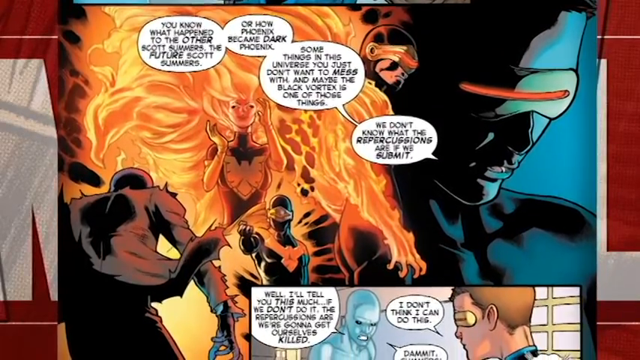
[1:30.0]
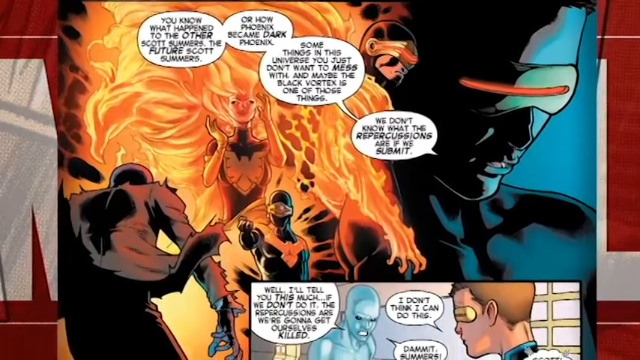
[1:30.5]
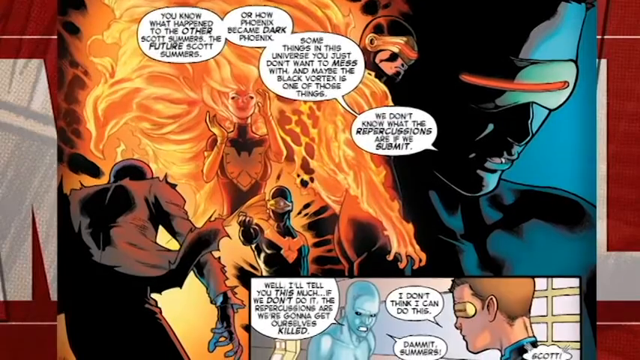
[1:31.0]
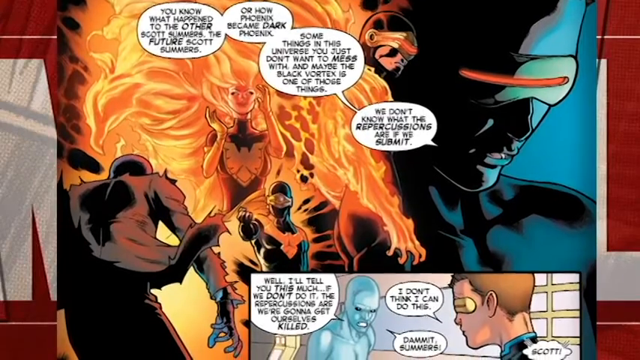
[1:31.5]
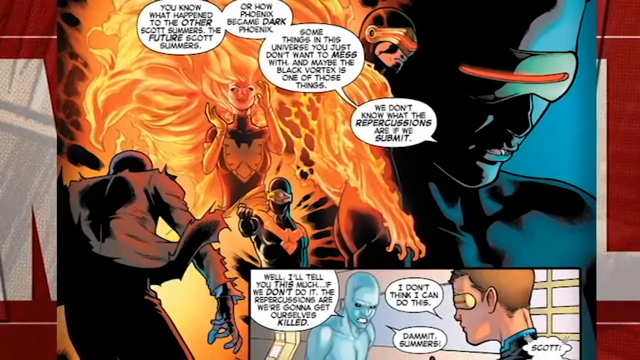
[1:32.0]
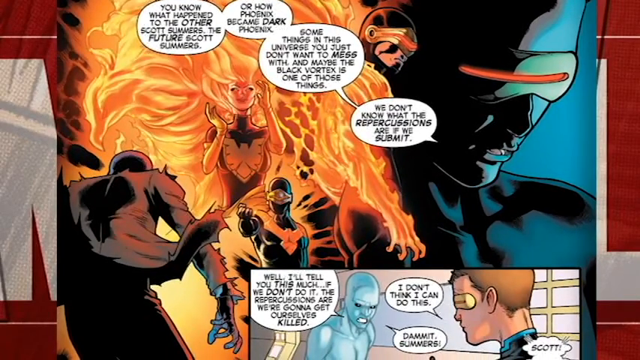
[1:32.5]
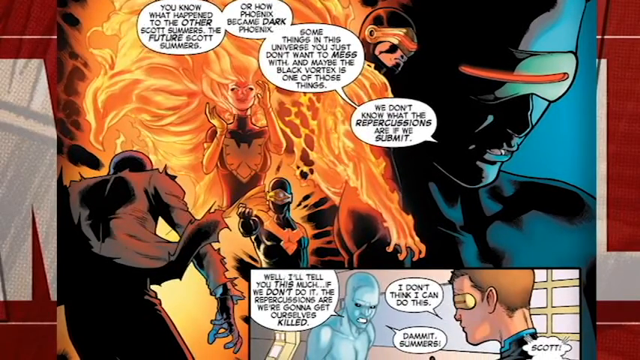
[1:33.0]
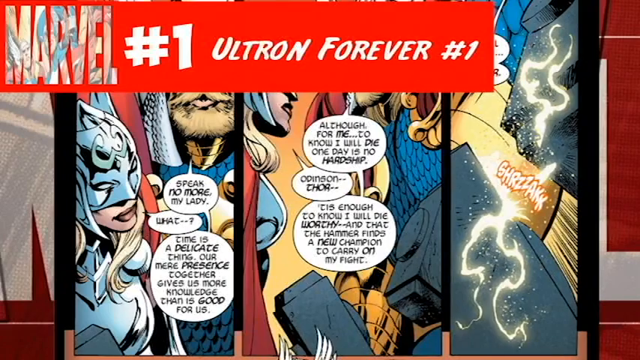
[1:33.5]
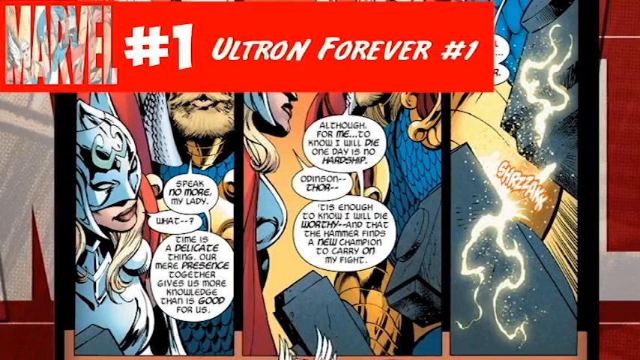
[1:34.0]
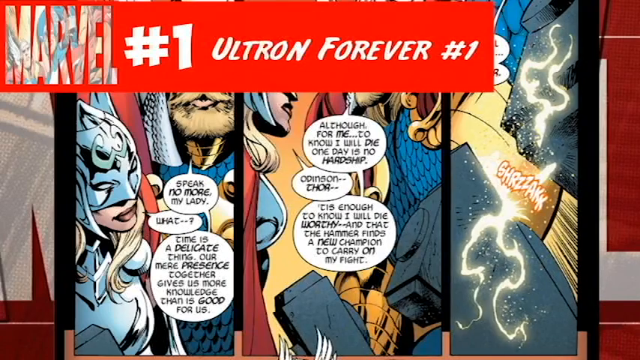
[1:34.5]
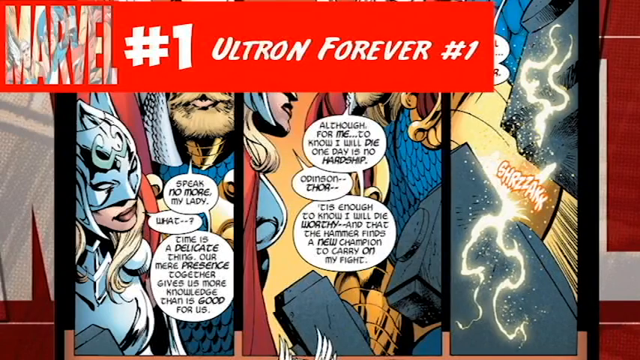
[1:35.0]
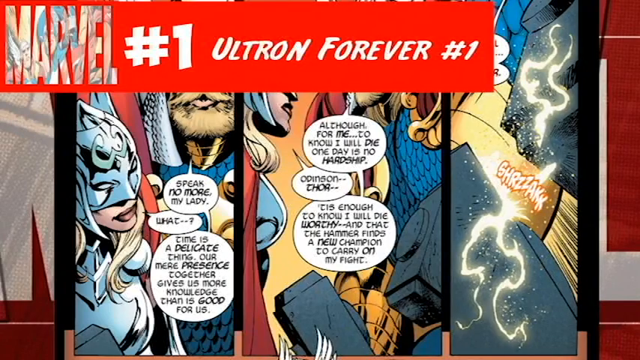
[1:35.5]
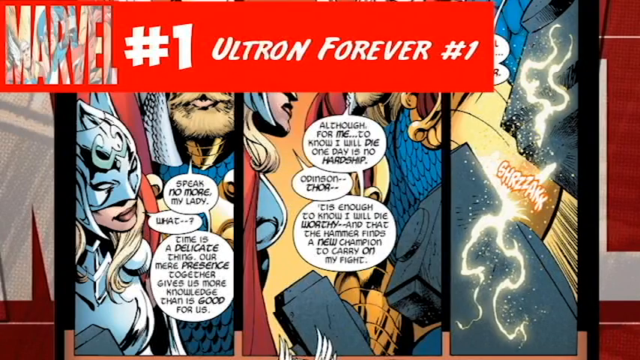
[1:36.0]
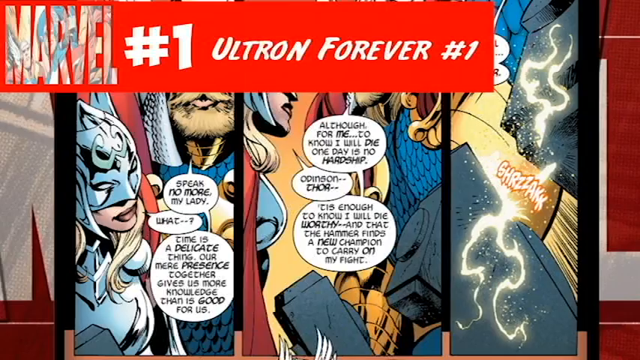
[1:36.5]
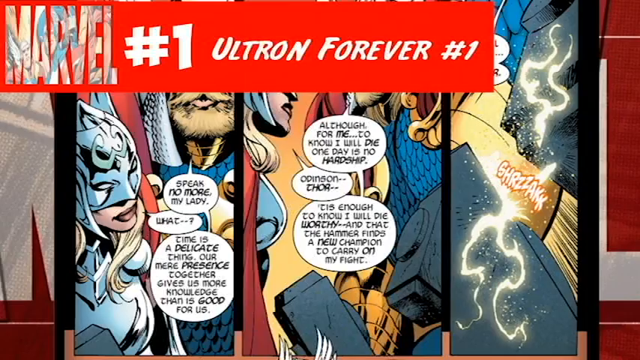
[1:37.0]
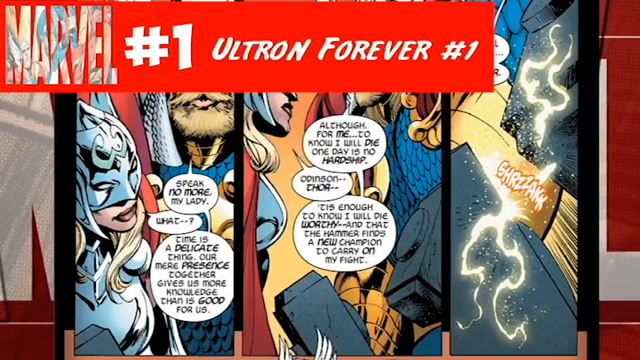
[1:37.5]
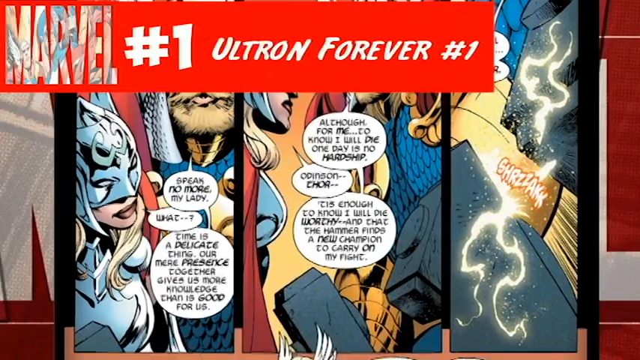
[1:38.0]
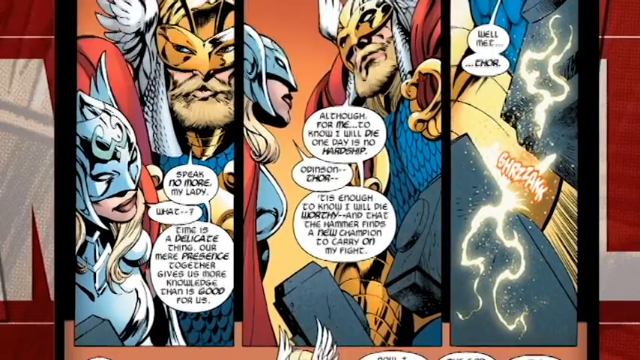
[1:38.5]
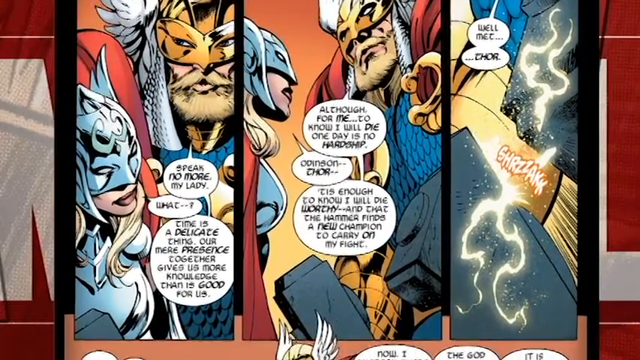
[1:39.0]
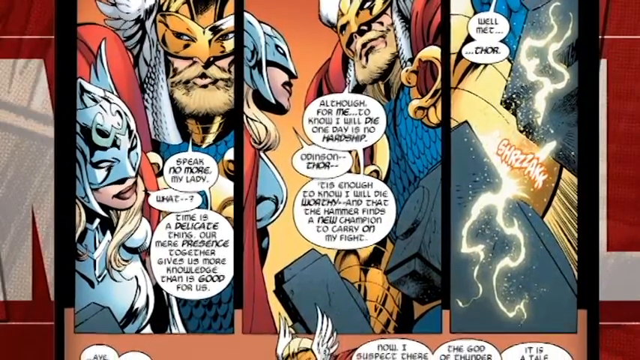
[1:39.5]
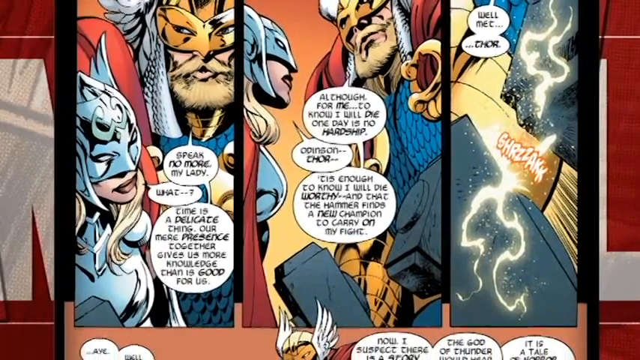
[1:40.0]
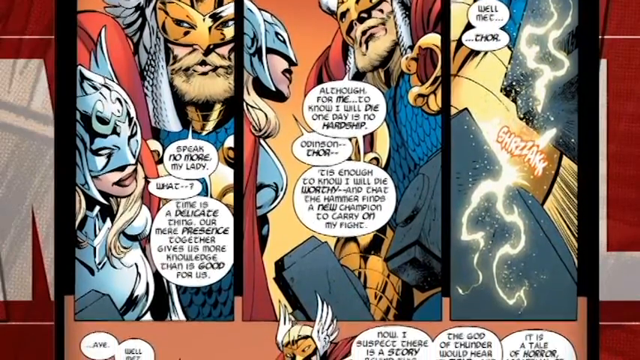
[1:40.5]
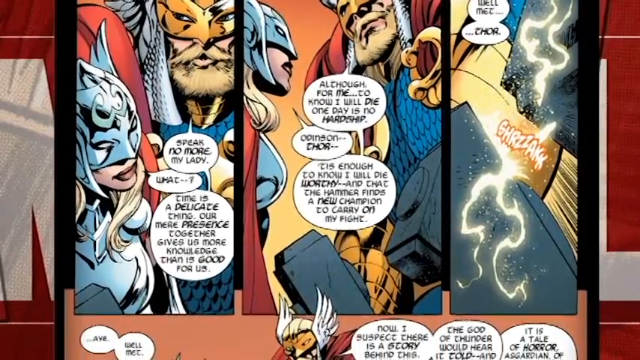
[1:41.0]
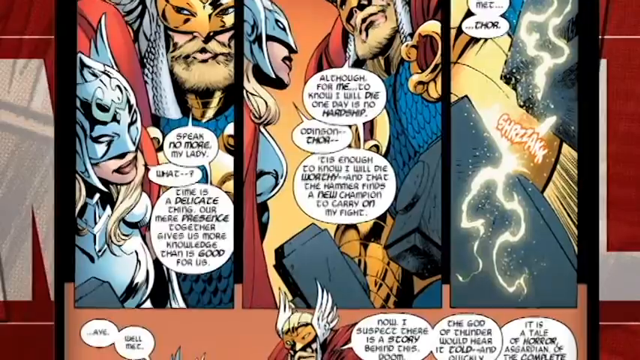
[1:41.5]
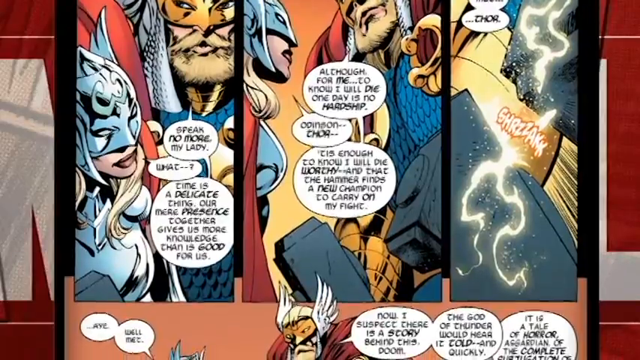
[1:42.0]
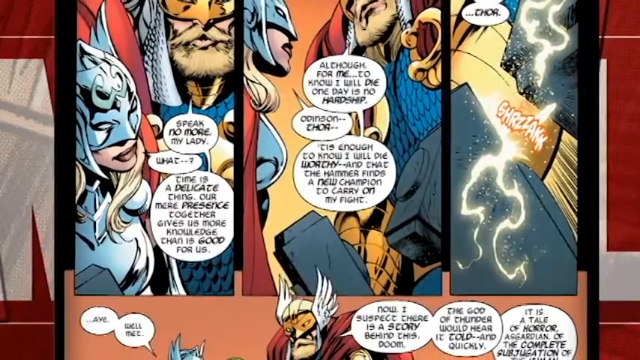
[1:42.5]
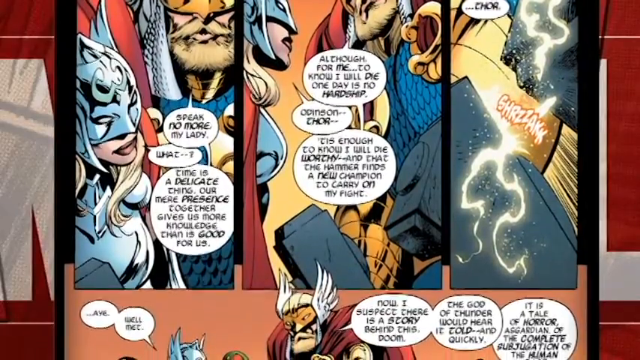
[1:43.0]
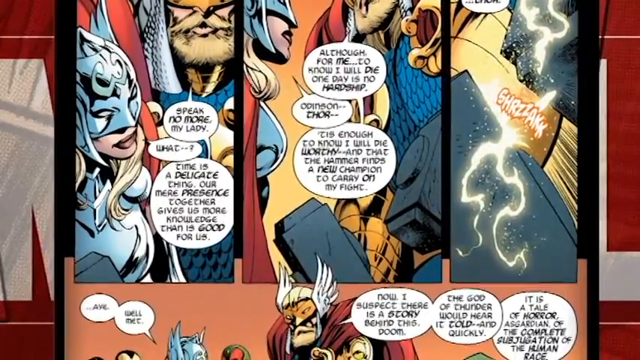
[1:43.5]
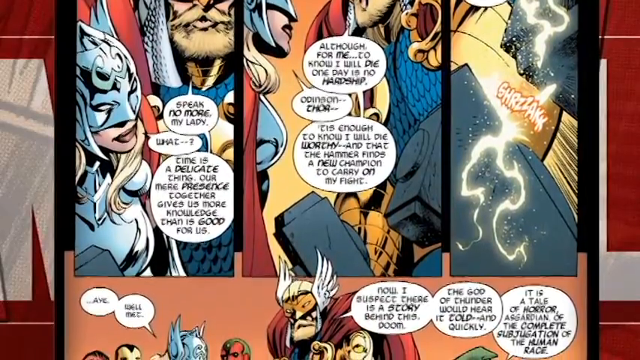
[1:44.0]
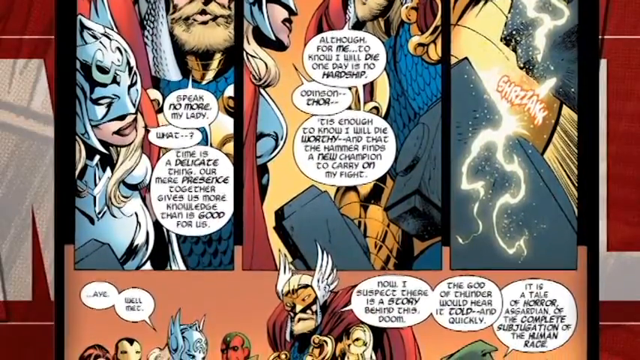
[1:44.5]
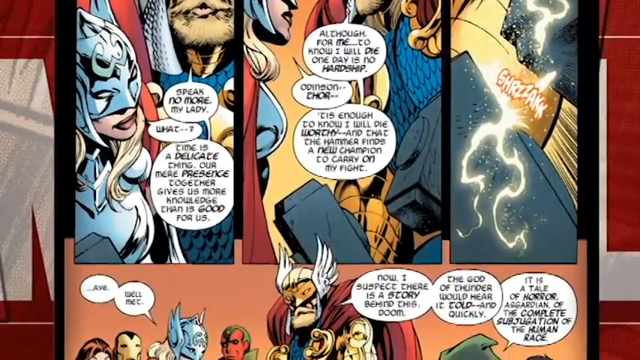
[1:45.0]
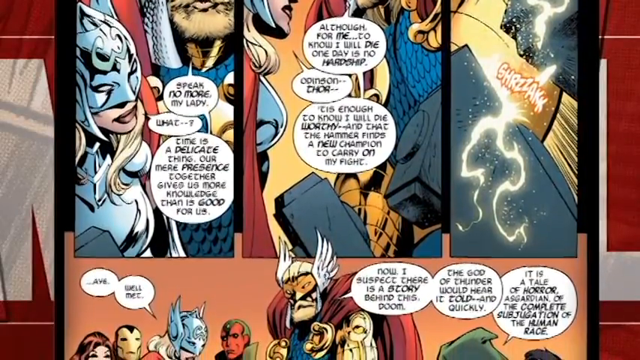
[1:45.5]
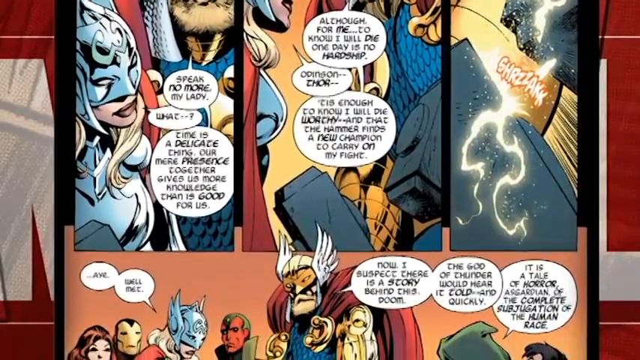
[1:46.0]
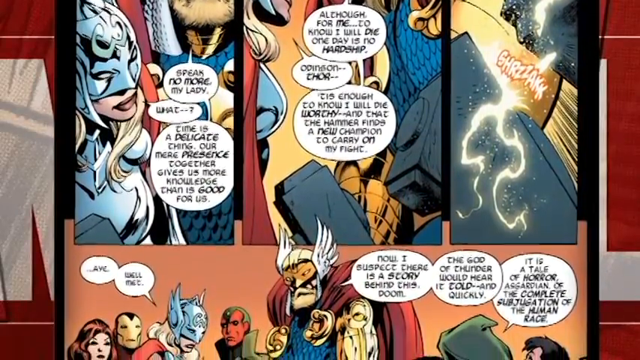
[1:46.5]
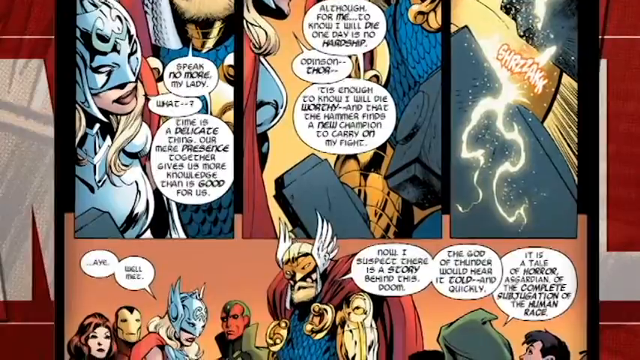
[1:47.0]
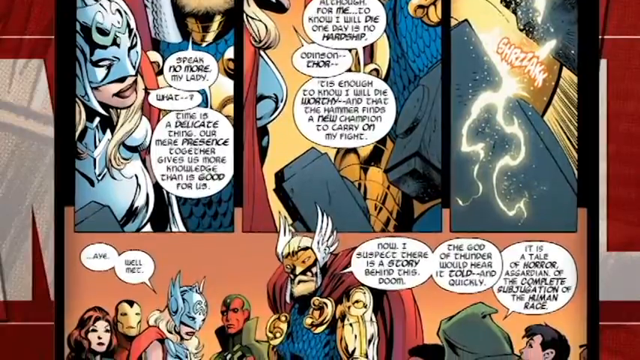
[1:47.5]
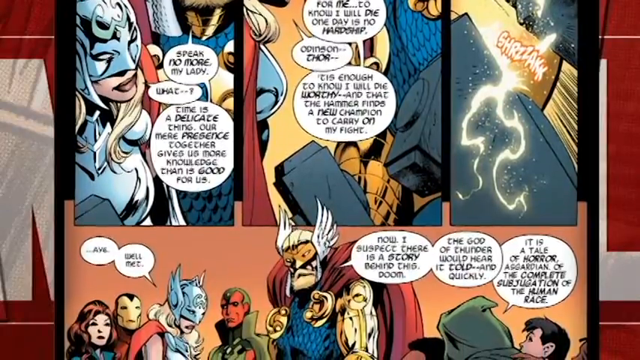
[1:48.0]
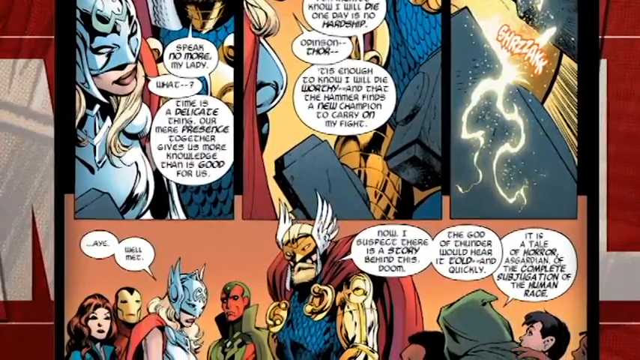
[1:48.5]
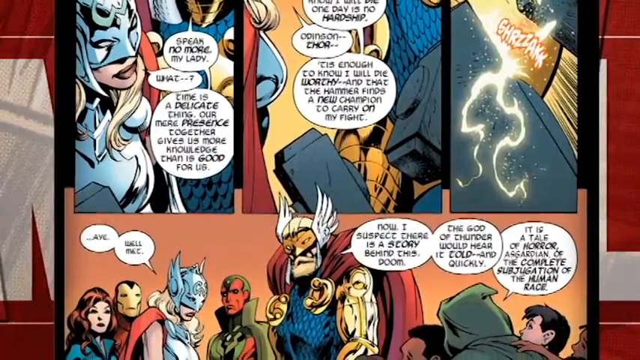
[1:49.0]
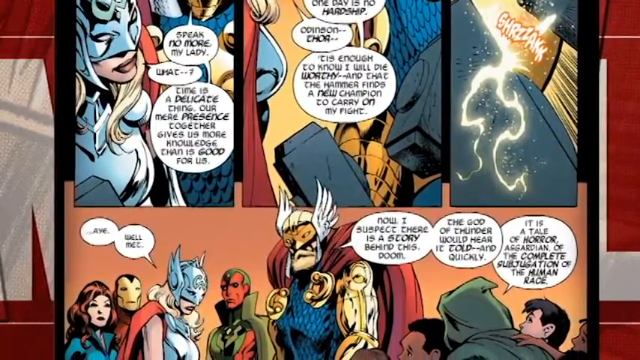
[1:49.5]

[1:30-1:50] The view continues with the large panel and then the last panel in the lower right corner, which depicts the blue person and the one with the mask. The screen then switches to "Marvel No. 1, Ultron Forever No. 1." This comic is divided into three panels, divided vertically this time and read from right to left. One panel shows a woman wearing armor, including on her head, and a man with a bushy blonde beard and a mask; they are talking to each other. The second panel also depicts the two of them talking, and the third panel seems to be a sound effect panel. The panels then scroll down to one large horizontal panel depicting various people.